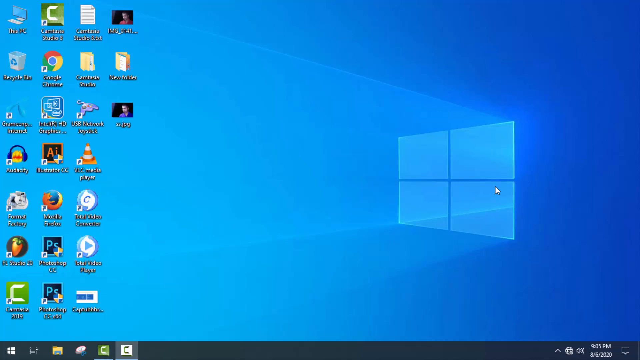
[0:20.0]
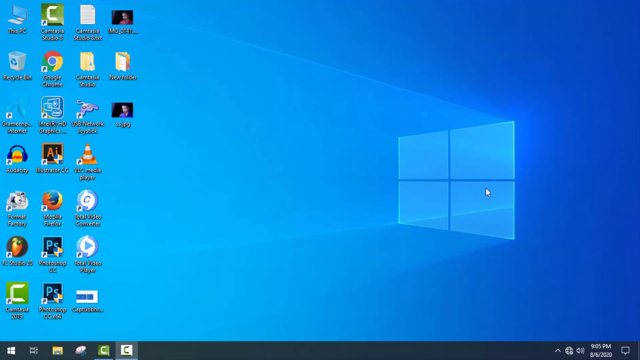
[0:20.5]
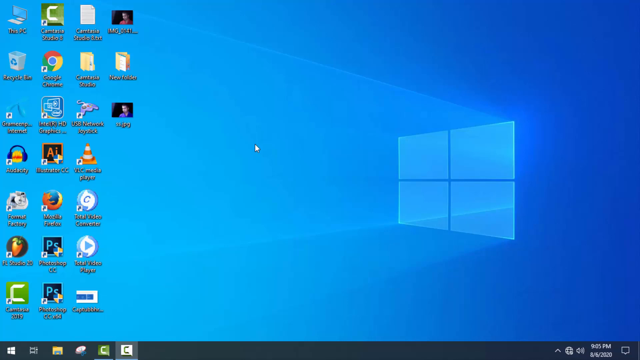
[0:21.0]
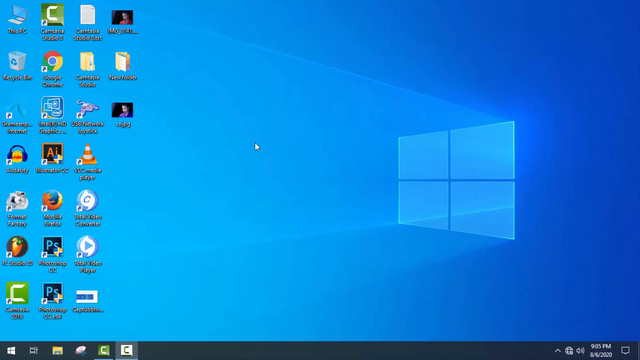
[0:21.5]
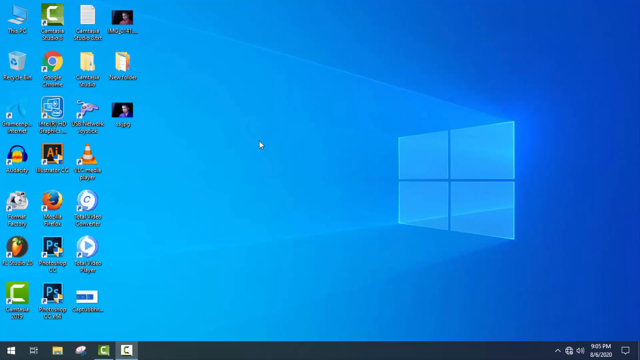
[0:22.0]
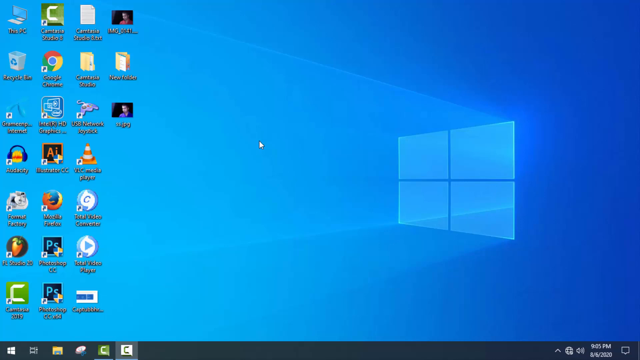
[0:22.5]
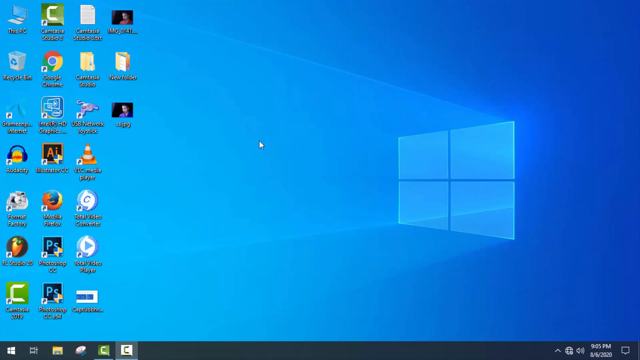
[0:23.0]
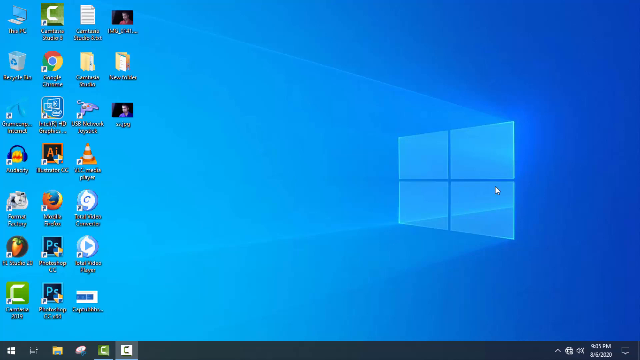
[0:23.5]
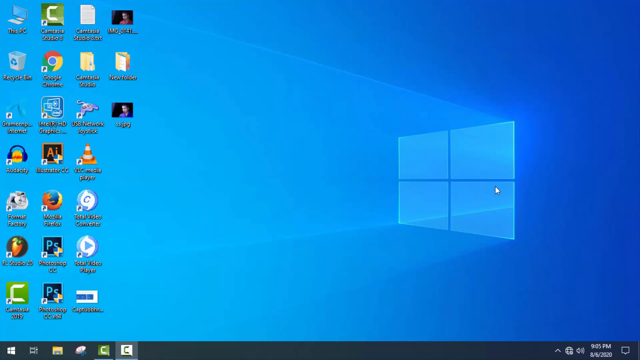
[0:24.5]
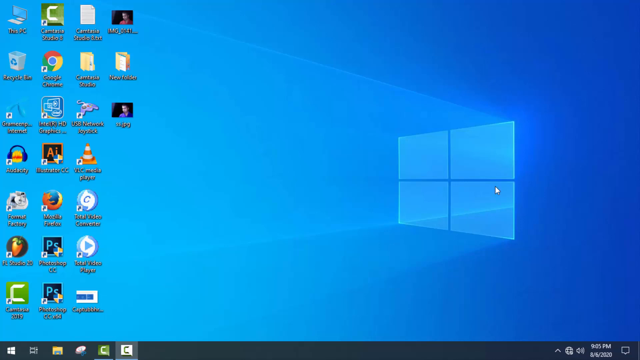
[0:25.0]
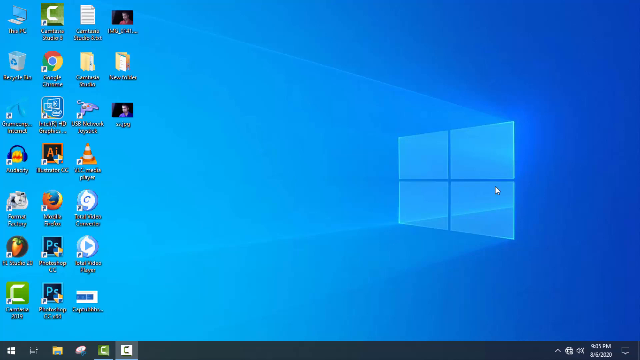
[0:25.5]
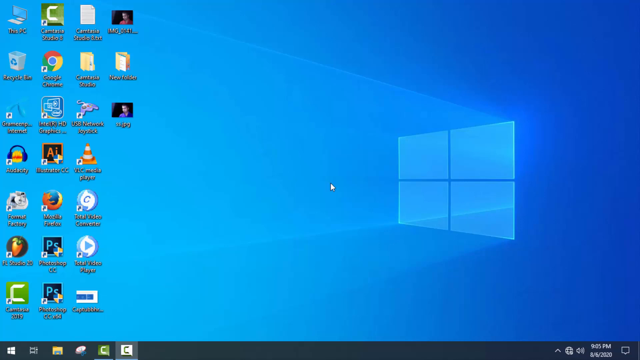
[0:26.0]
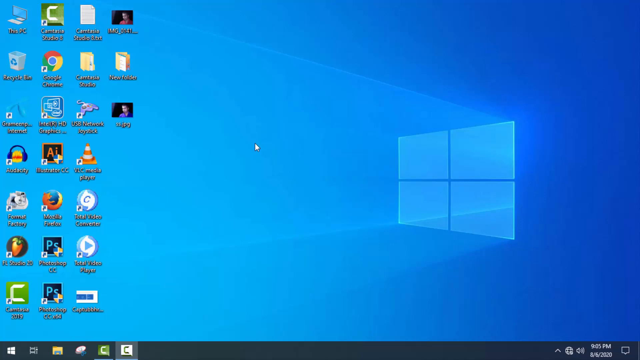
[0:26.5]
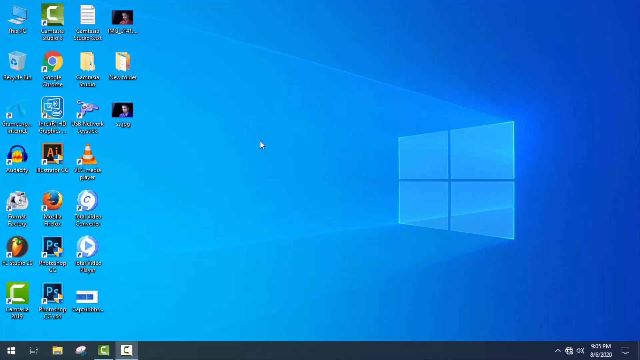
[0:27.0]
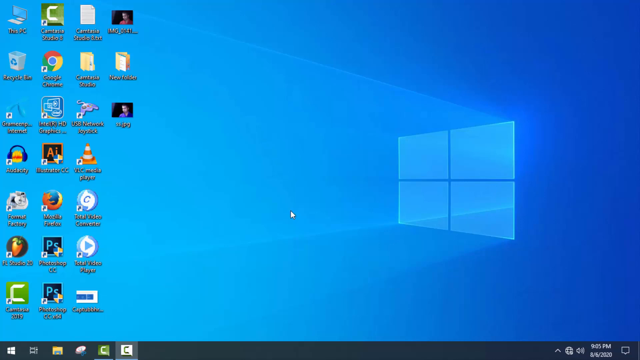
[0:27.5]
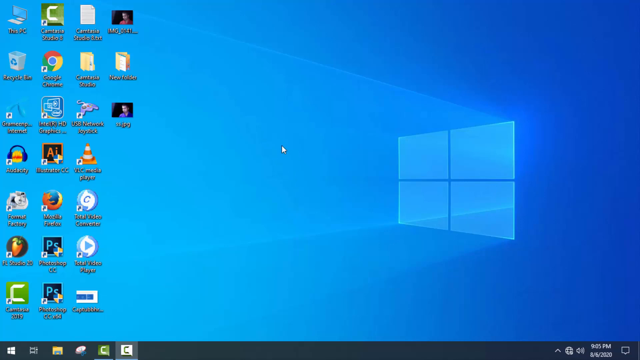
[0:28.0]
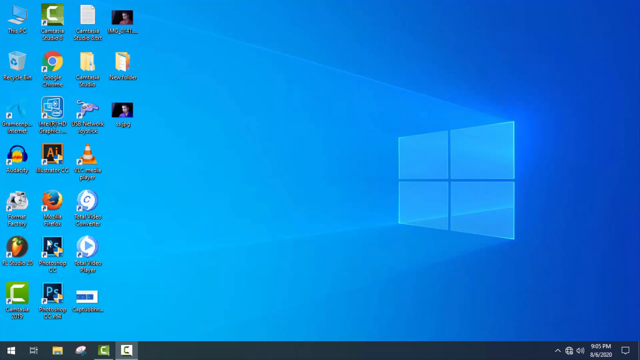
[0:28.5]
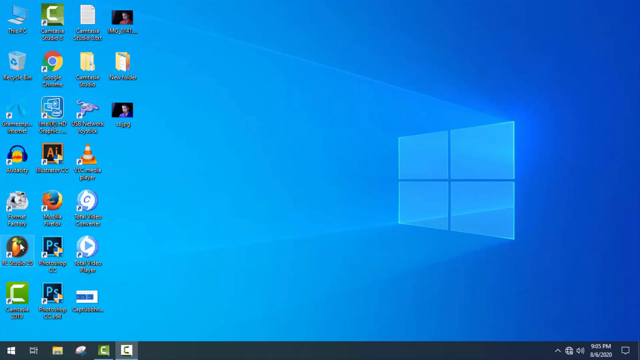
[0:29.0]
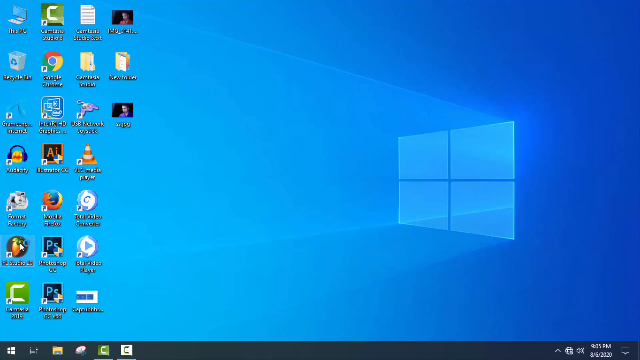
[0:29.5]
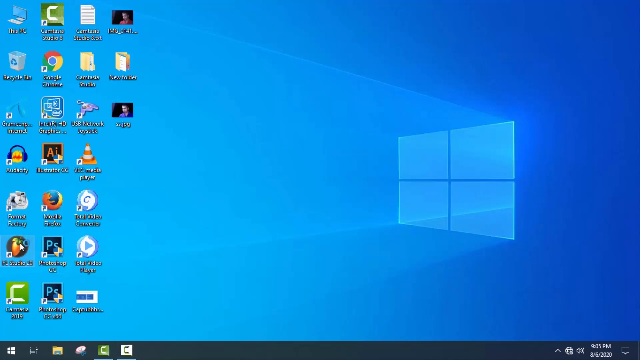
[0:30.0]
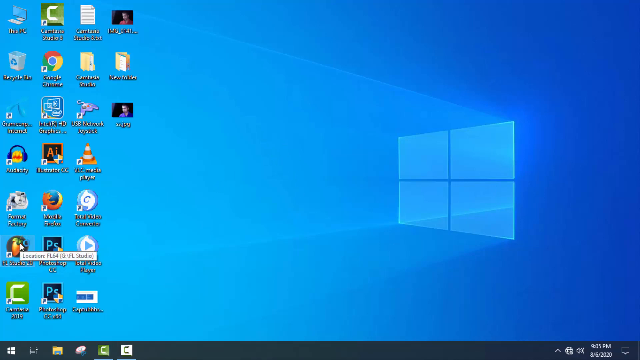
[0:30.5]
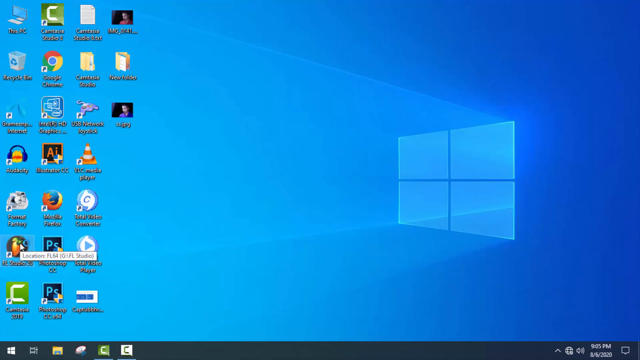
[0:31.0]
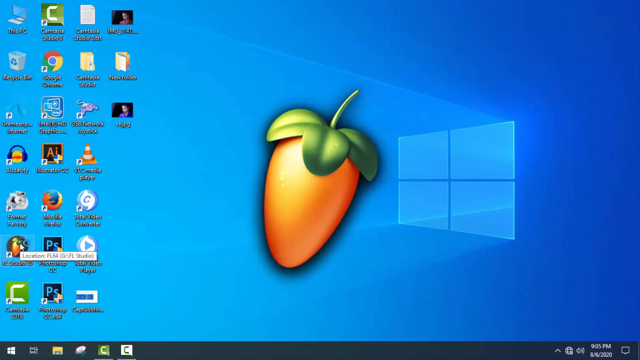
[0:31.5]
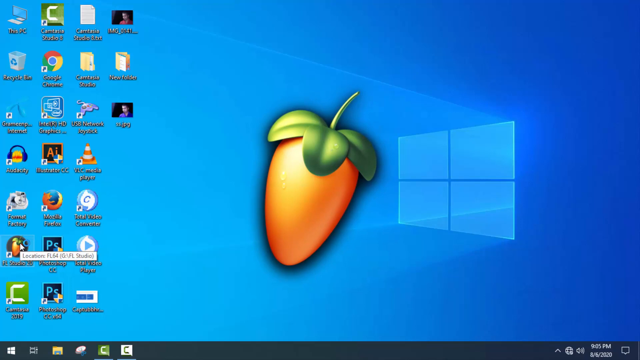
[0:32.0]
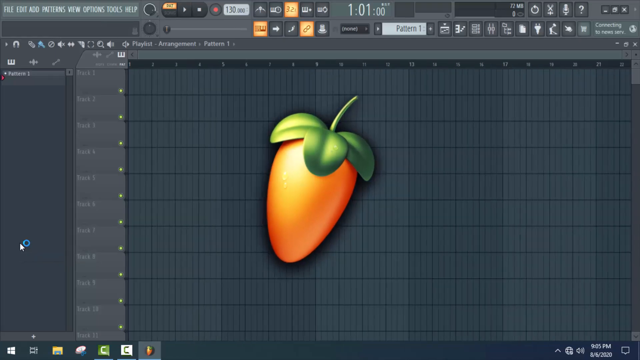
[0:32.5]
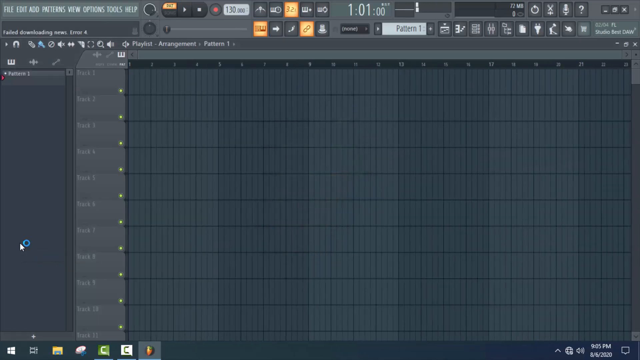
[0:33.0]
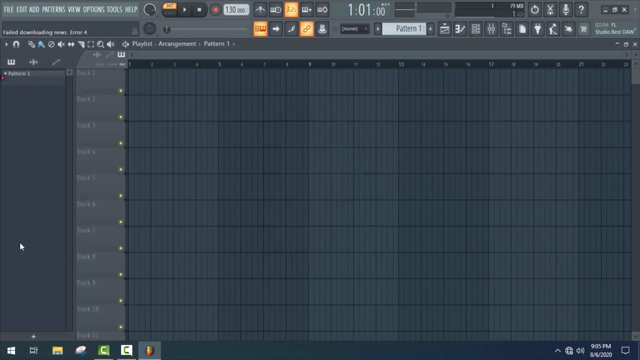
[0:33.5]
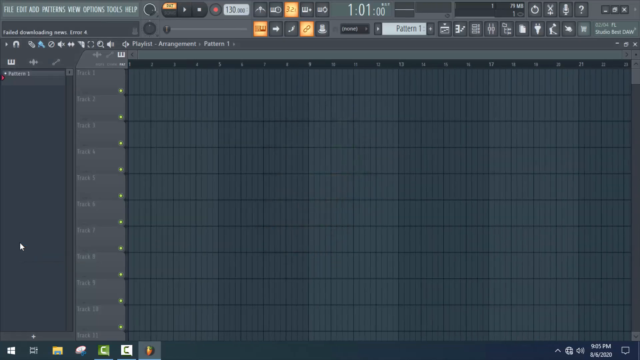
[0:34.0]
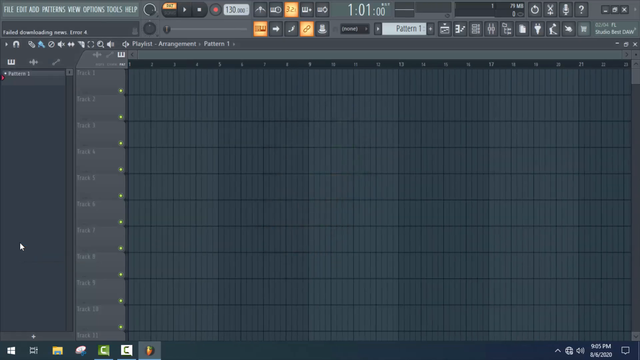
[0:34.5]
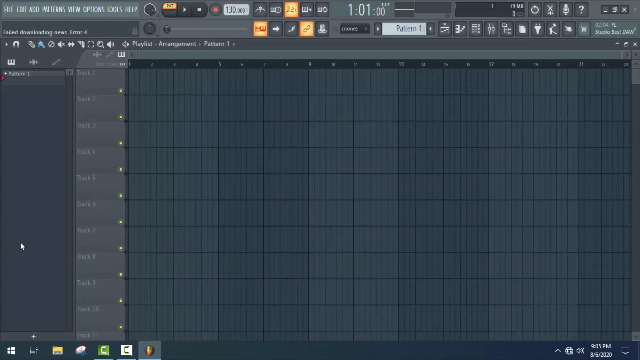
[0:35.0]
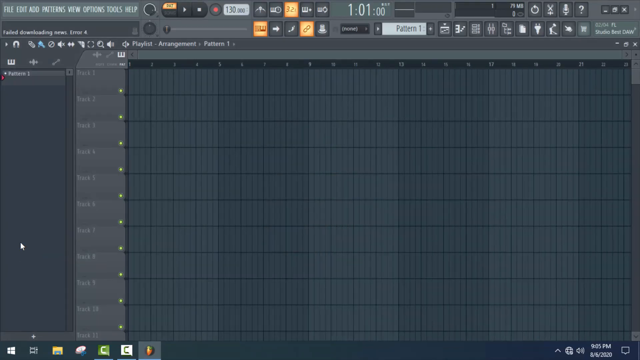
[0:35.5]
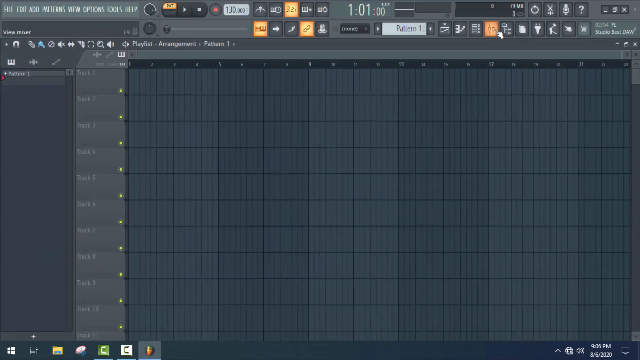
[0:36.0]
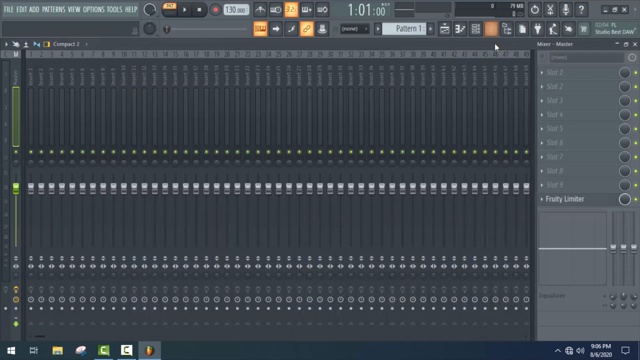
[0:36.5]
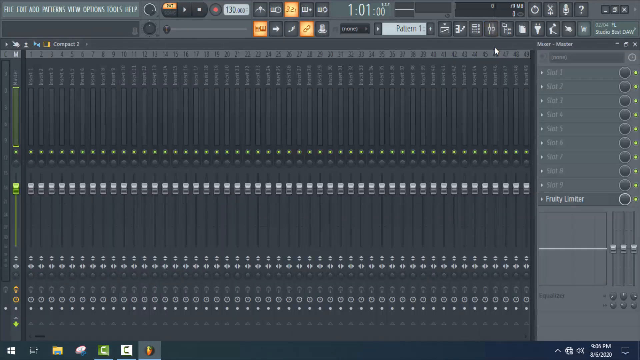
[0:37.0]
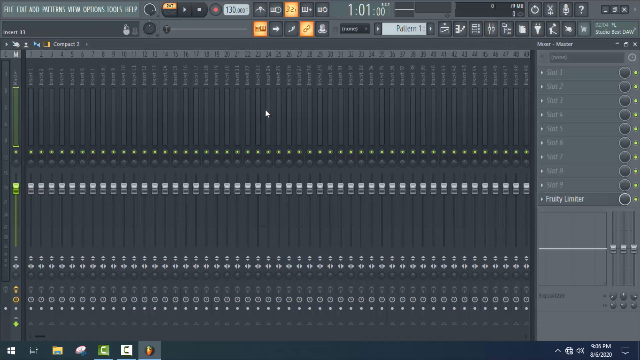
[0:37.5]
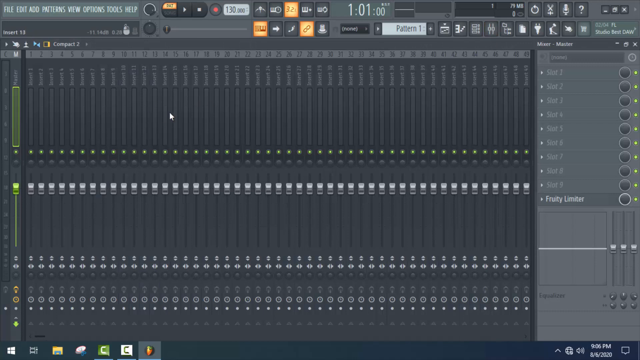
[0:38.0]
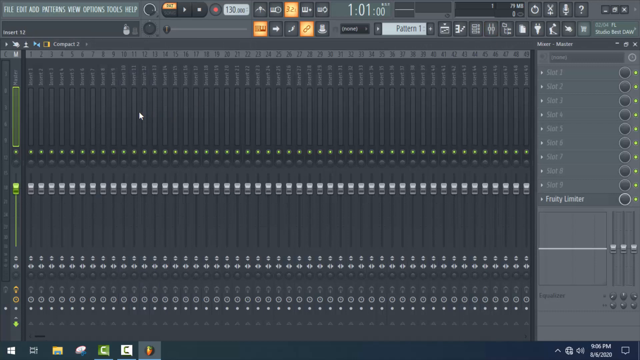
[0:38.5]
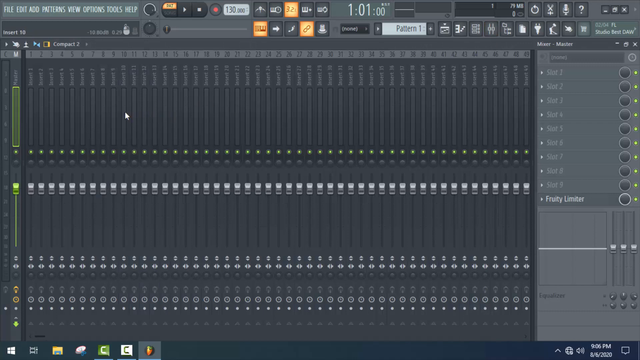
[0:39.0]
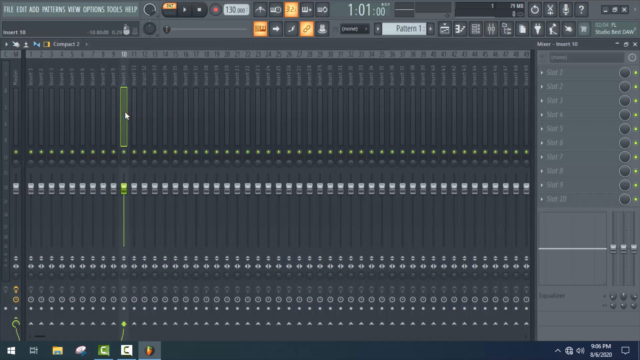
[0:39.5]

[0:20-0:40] The view remains on what looks to be the Windows desktop screen. The mouse cursor moves around, and he opens what looks to be software for editing and transcribing music, and the shot ends around there. The computer seems to be a little older.